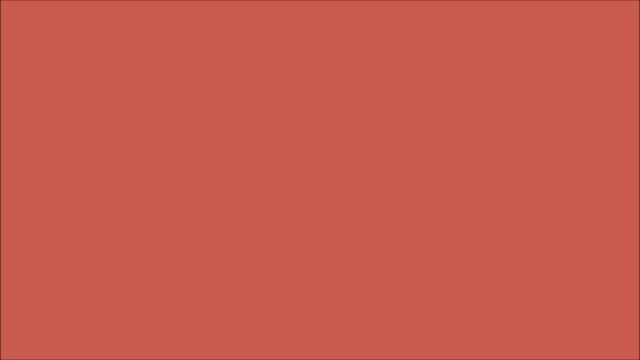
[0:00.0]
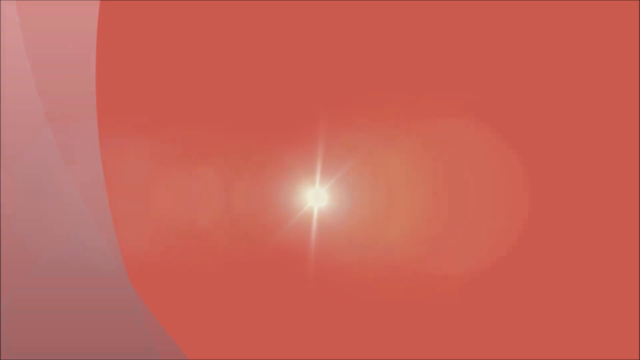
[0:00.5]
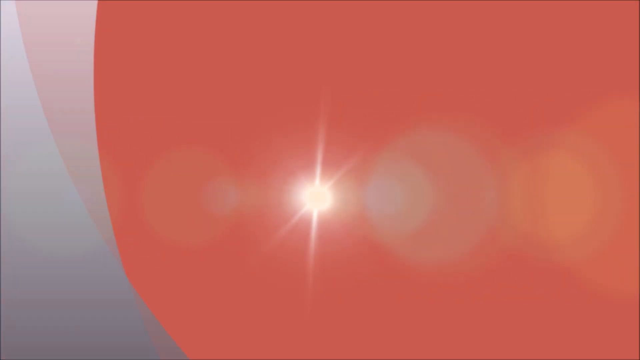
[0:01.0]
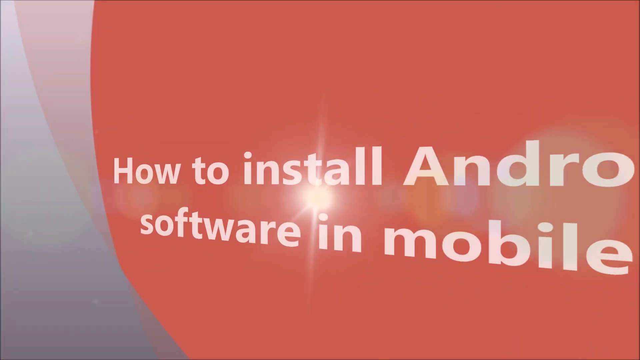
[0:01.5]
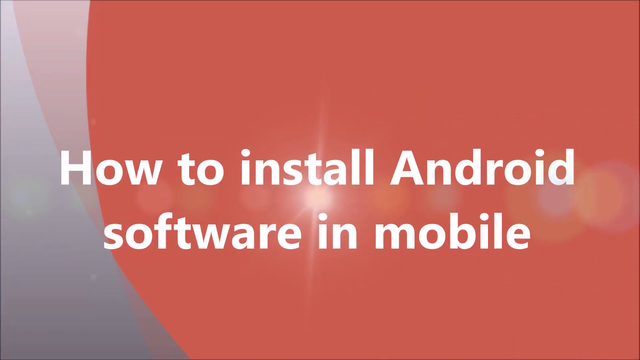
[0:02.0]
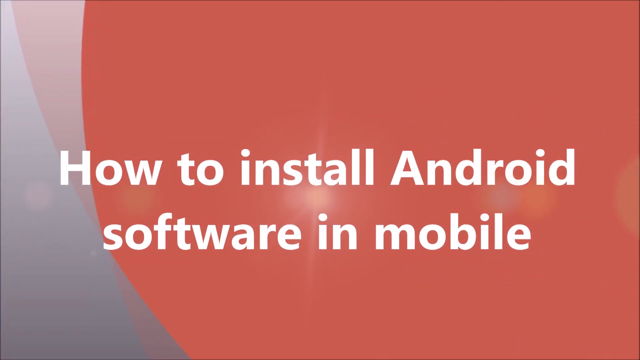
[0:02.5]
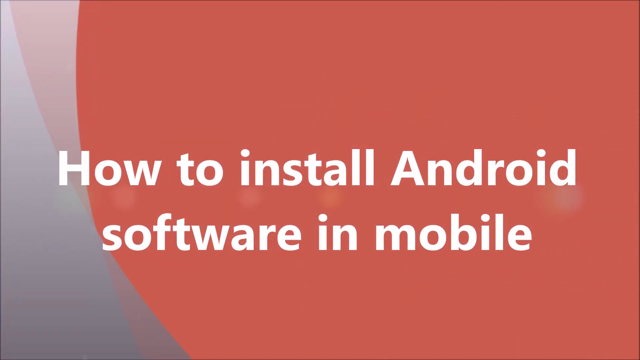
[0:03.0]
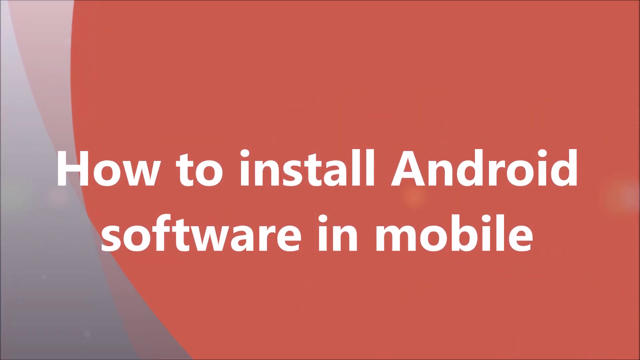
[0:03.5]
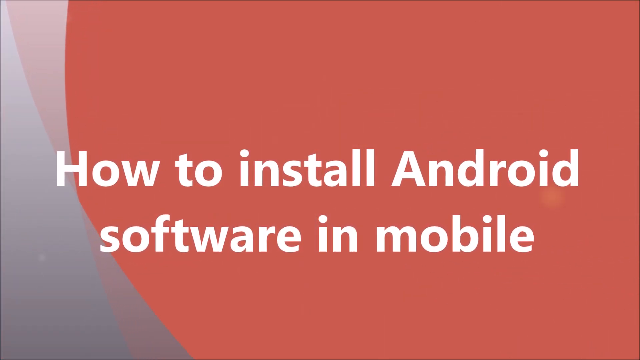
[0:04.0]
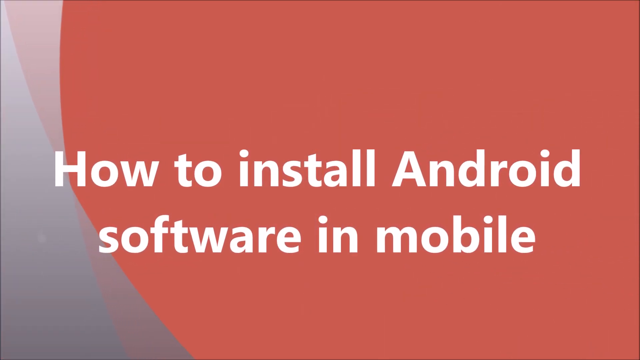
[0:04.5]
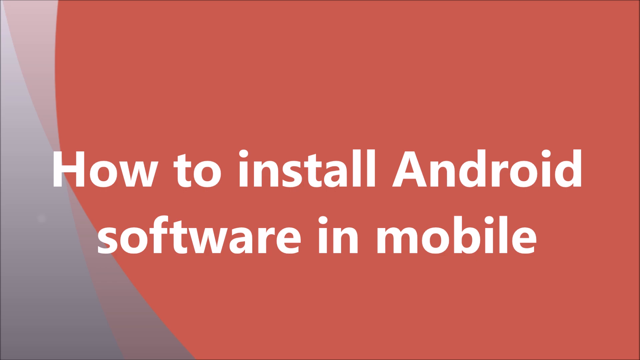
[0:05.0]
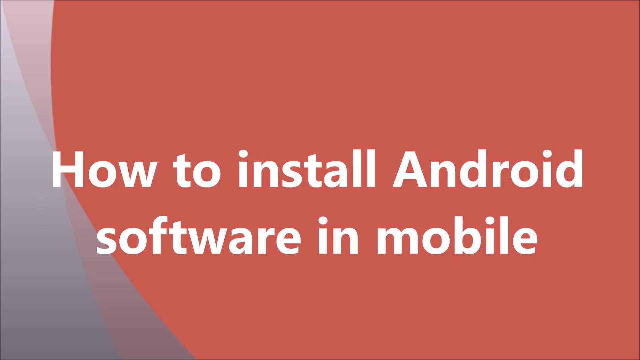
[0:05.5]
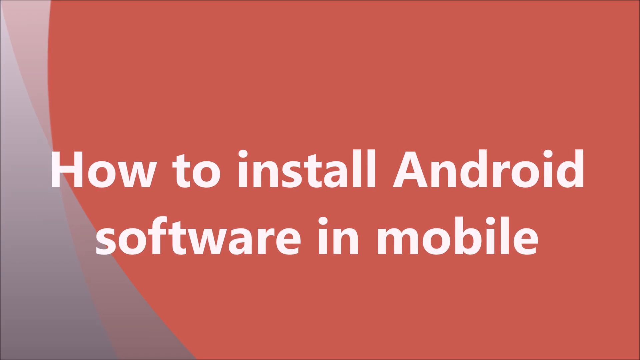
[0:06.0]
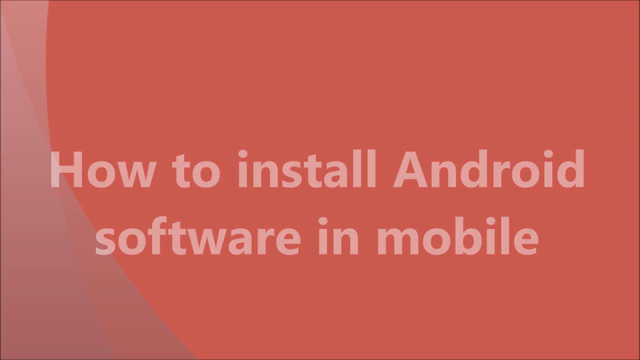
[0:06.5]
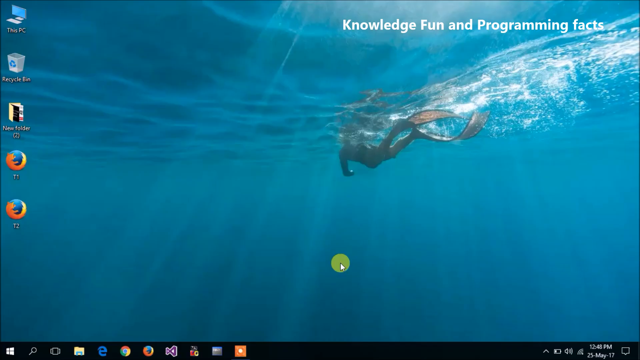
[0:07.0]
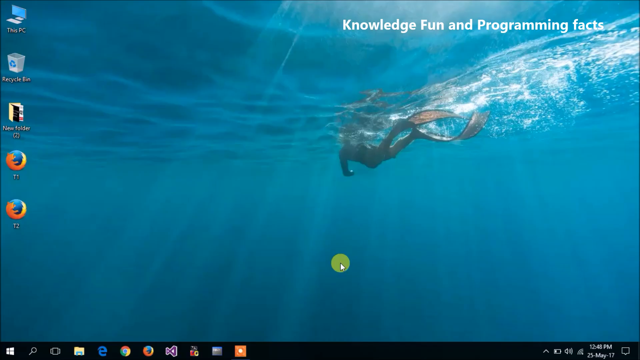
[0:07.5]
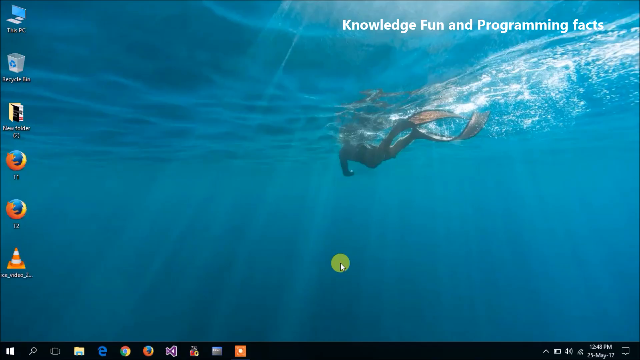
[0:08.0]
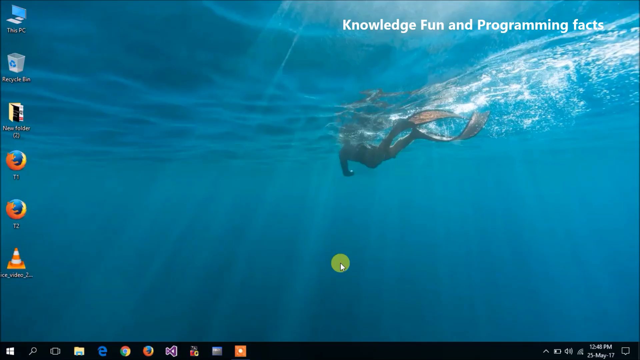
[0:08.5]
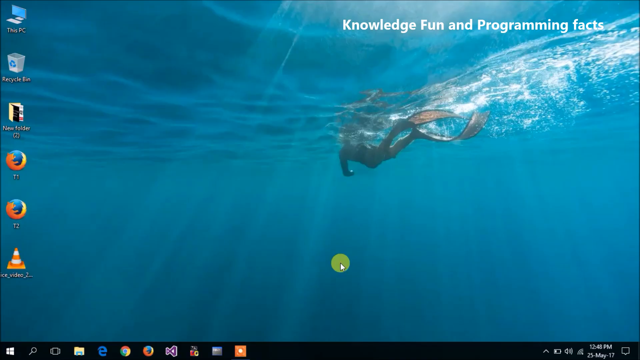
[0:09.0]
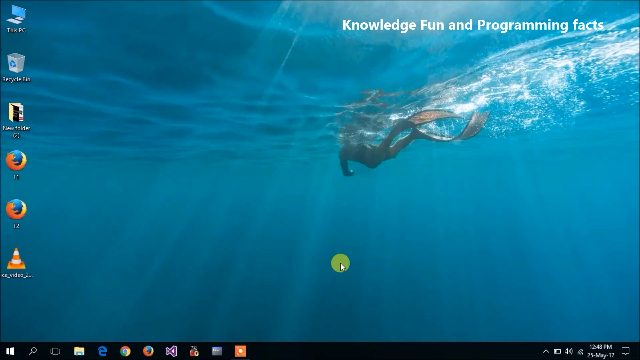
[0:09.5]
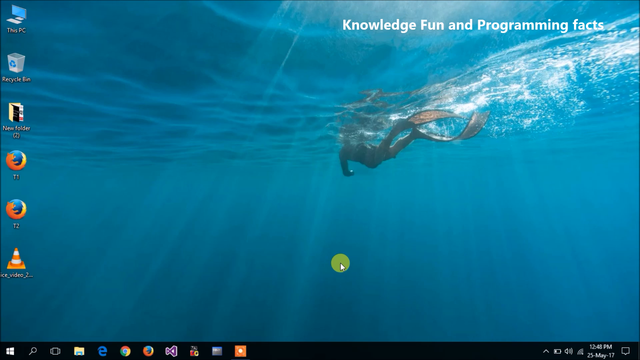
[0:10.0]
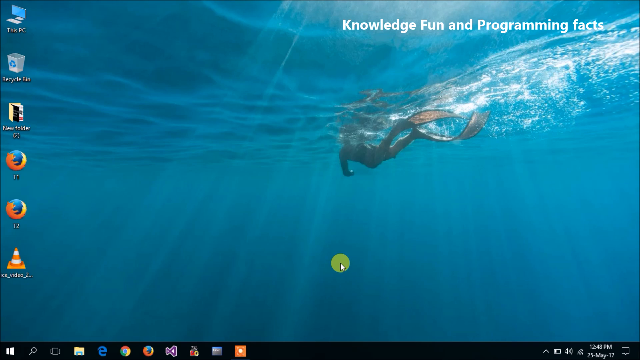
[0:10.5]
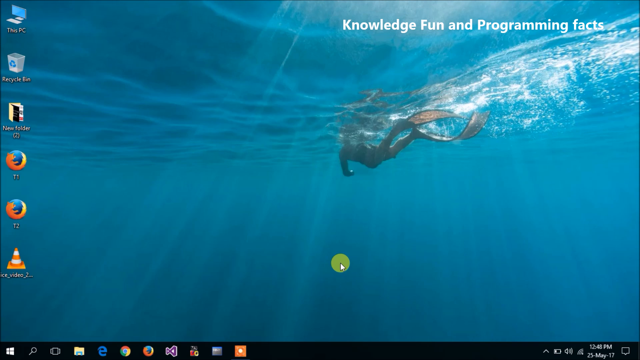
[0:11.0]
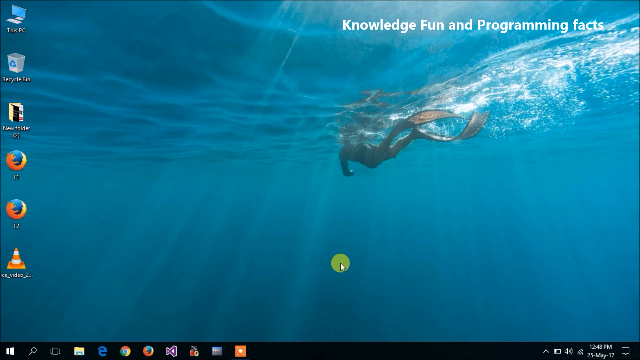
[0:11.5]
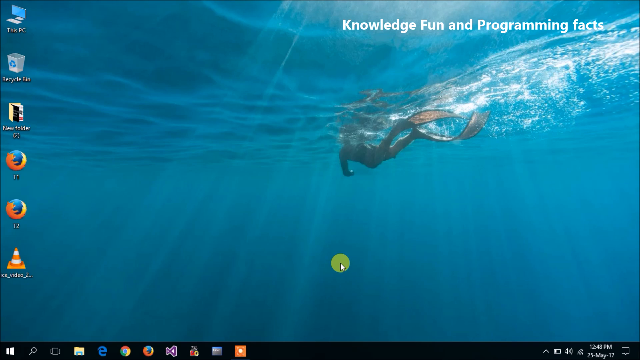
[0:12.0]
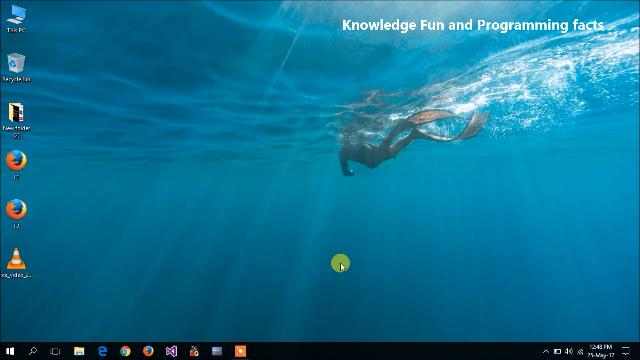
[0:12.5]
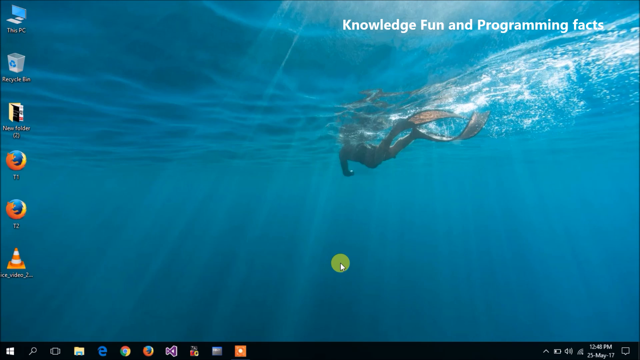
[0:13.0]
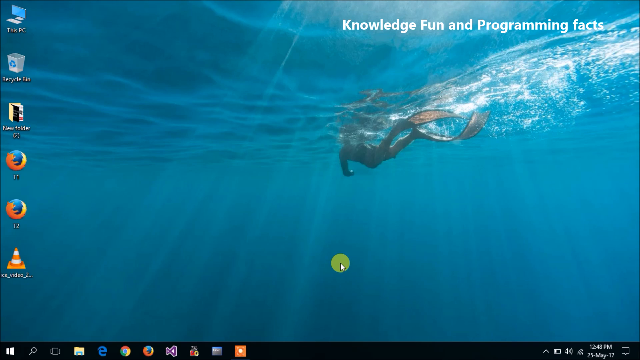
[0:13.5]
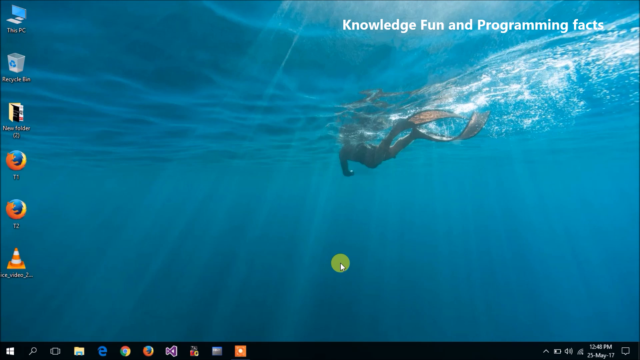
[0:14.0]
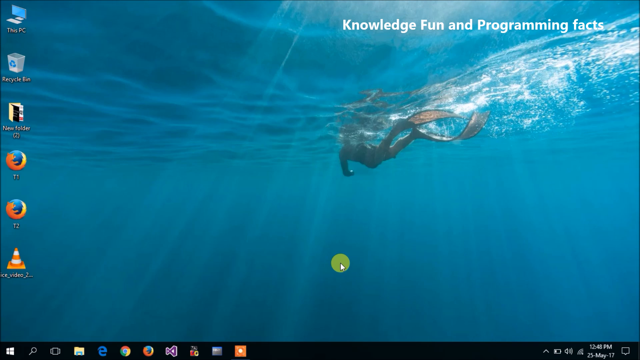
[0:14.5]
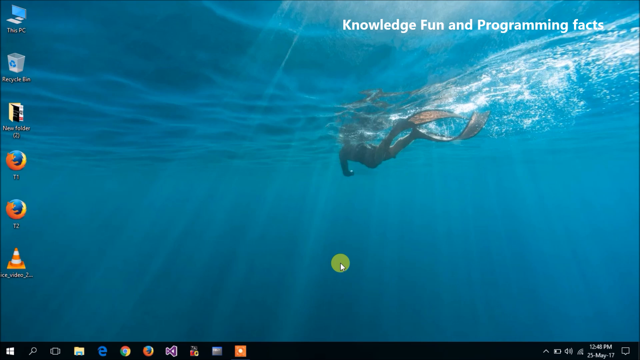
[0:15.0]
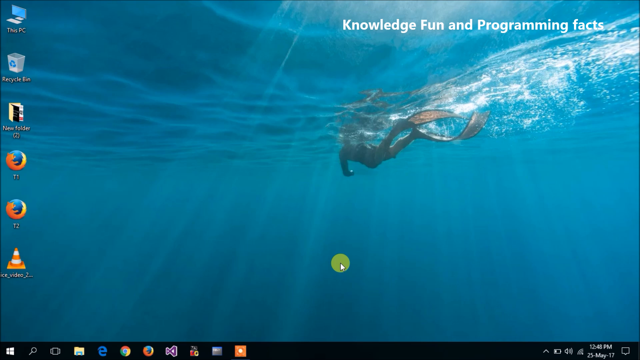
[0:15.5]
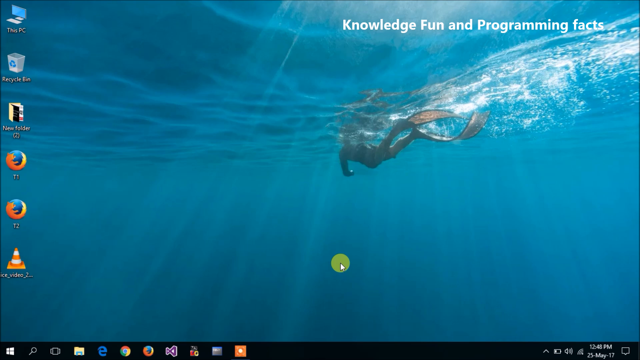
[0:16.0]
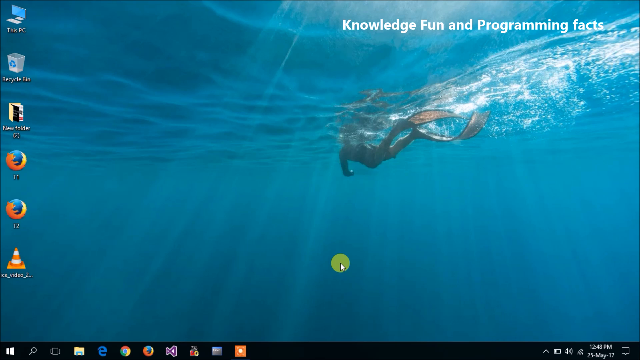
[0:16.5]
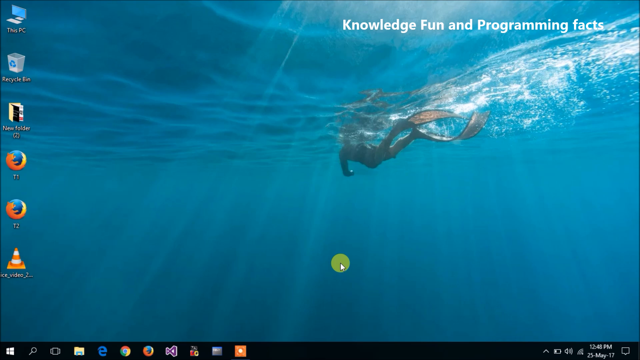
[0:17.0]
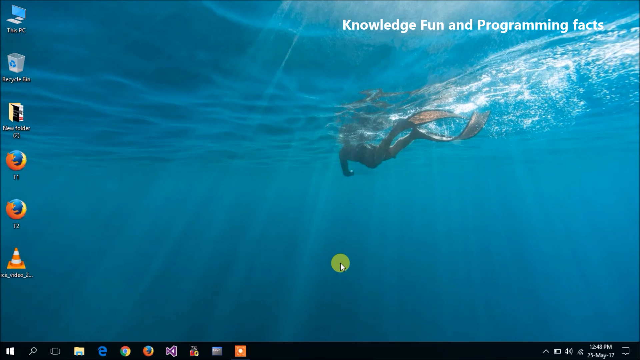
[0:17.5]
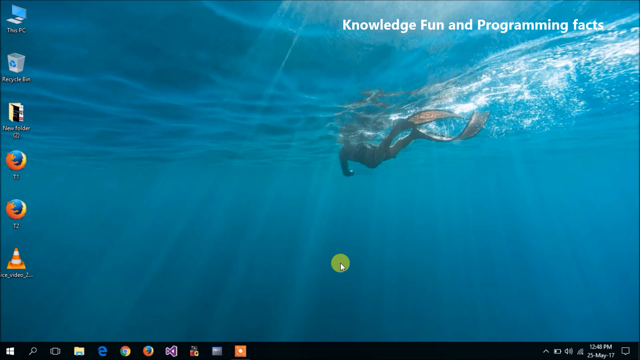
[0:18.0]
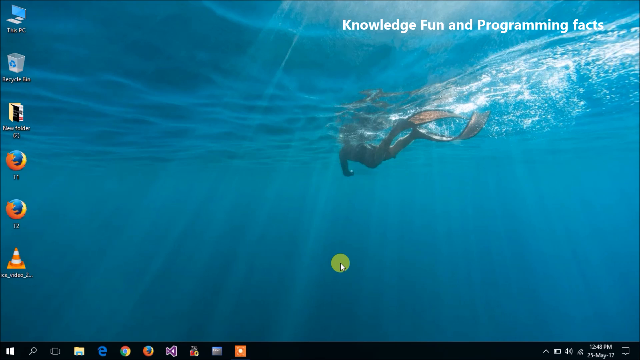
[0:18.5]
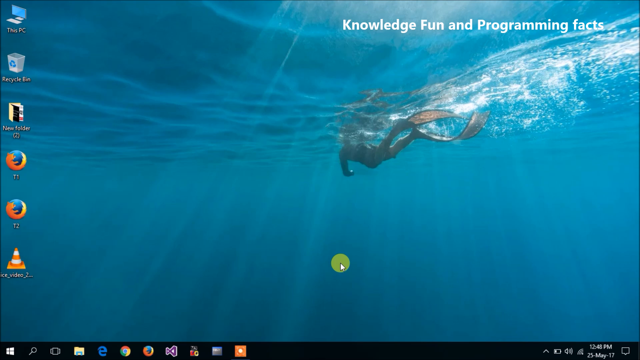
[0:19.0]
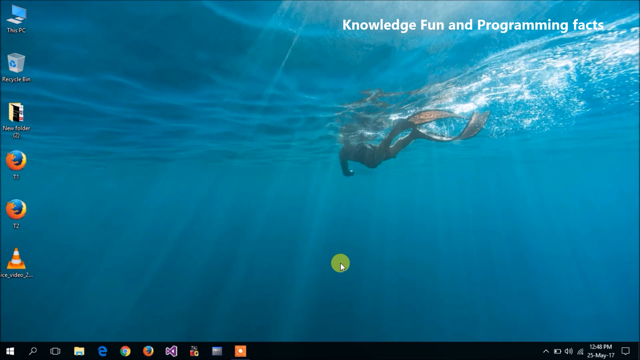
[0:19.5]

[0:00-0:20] The video opens with what looks like a bright light in the middle of the screen against a brown, reddish background. The text "how to install Android software in mobile" appears. The light effects behind the text dissolve from the center out to the left and right sides of the screen, and then the text dissolves. The video transitions to a desktop. The desktop background image shows what looks like a diver whose two legs display two fish fins, and the background looks like the inside of an ocean, with water ripples and some rays of light coming in. In the top left-hand corner of the screen is the text "Knowledge Fun and Programming Facts." At the bottom center of the screen is a green circle with the computer cursor on top of it. On the left side of the screen are program icons including Firefox, Files, Recycle Bin and PC.